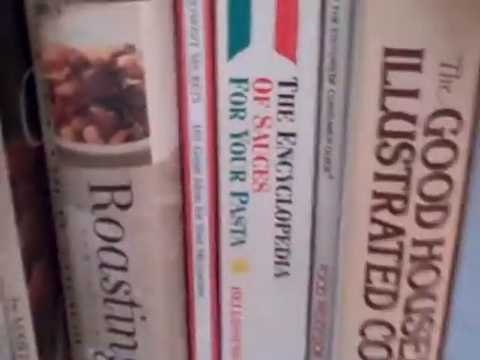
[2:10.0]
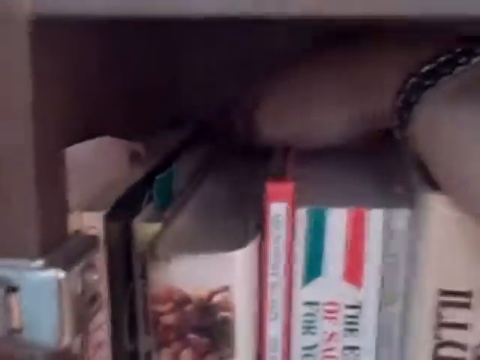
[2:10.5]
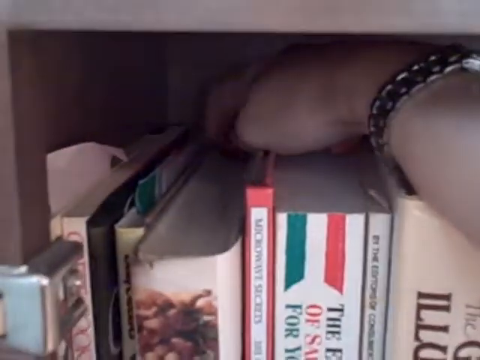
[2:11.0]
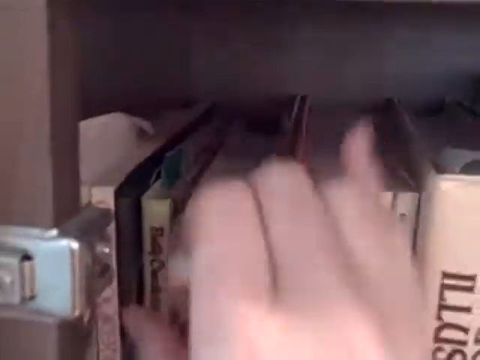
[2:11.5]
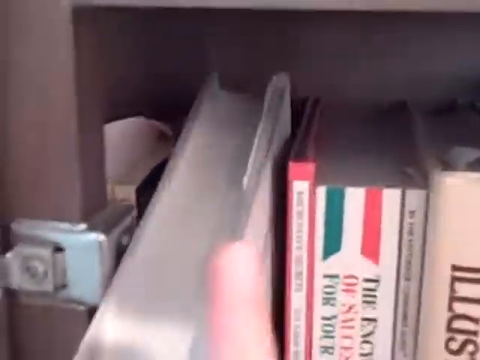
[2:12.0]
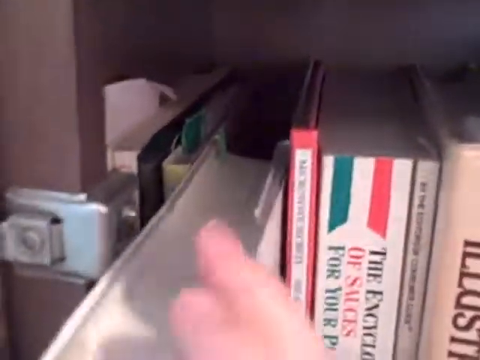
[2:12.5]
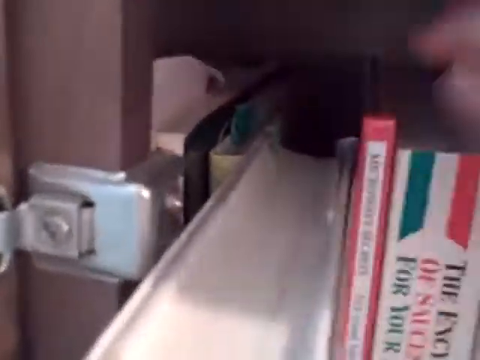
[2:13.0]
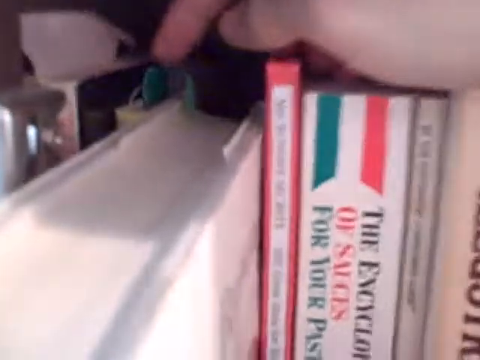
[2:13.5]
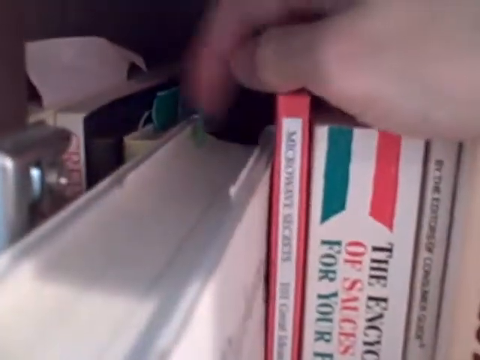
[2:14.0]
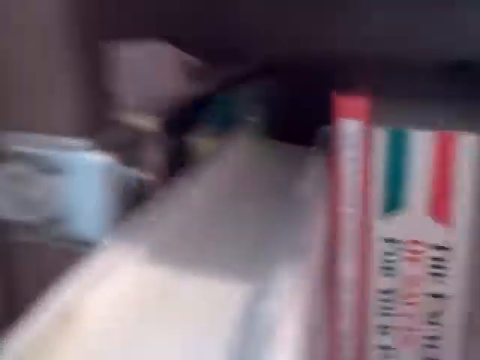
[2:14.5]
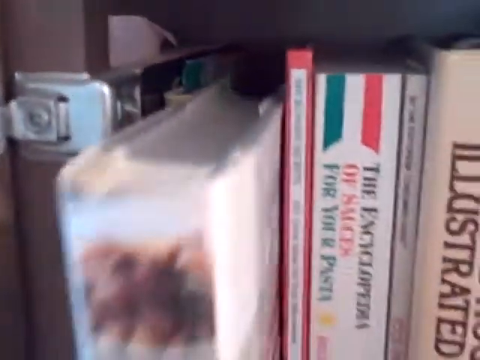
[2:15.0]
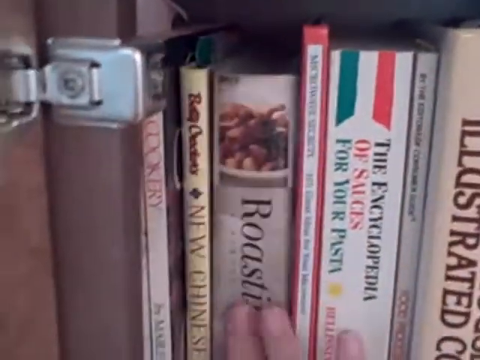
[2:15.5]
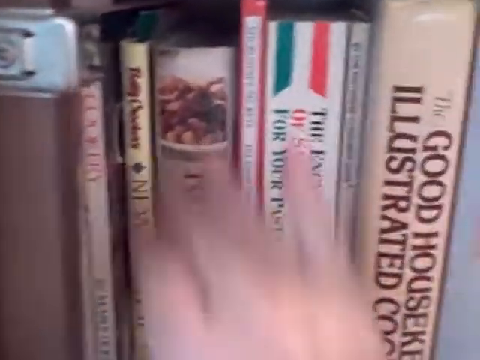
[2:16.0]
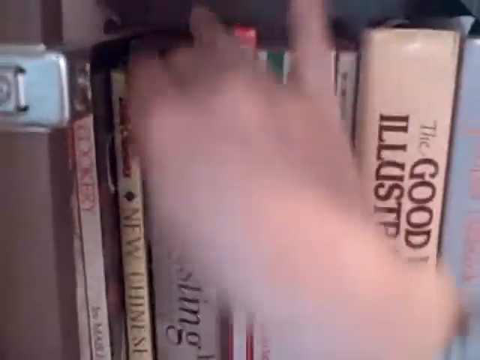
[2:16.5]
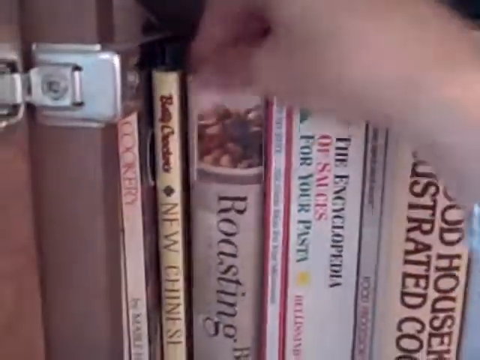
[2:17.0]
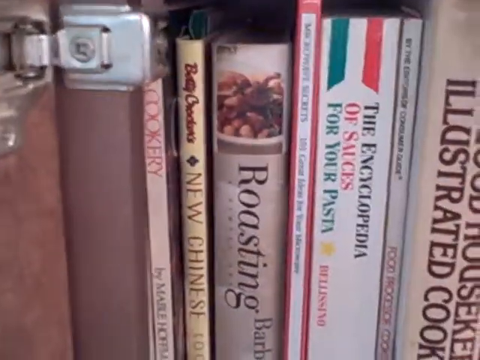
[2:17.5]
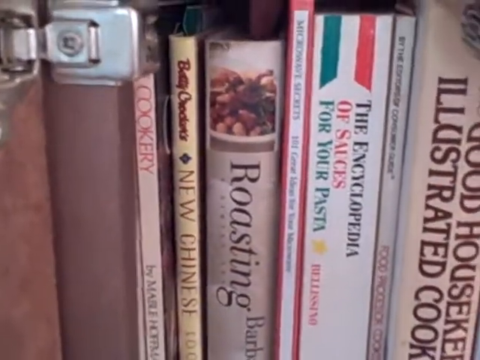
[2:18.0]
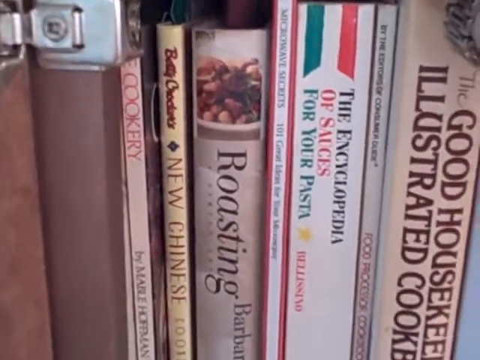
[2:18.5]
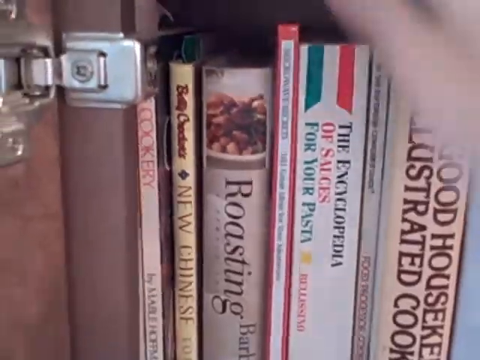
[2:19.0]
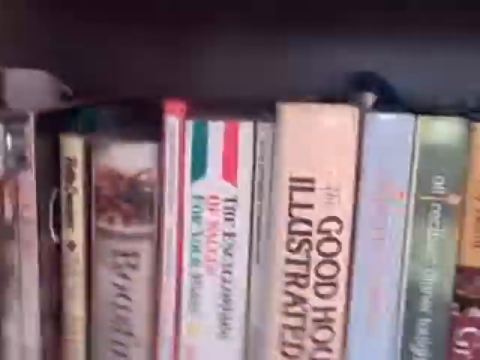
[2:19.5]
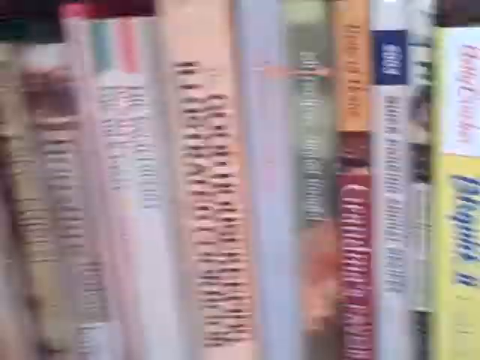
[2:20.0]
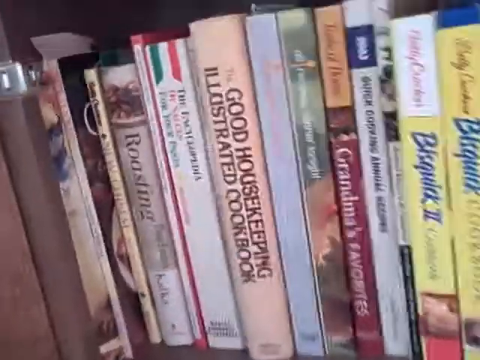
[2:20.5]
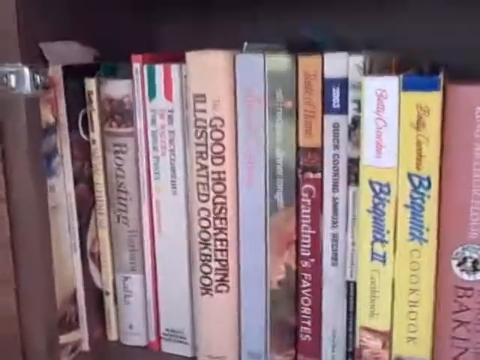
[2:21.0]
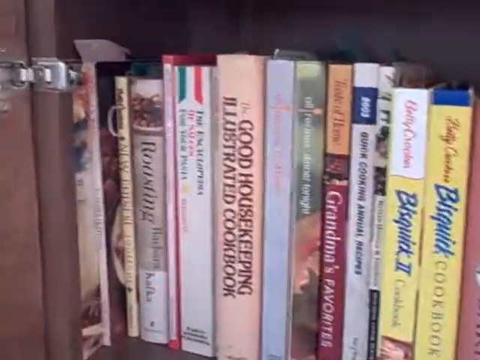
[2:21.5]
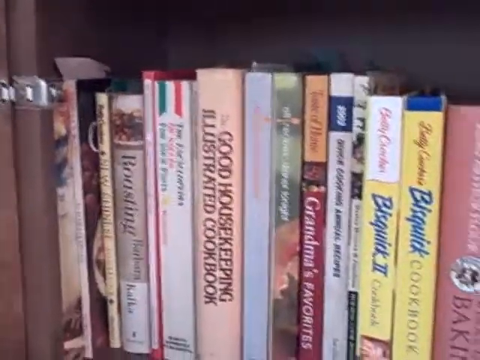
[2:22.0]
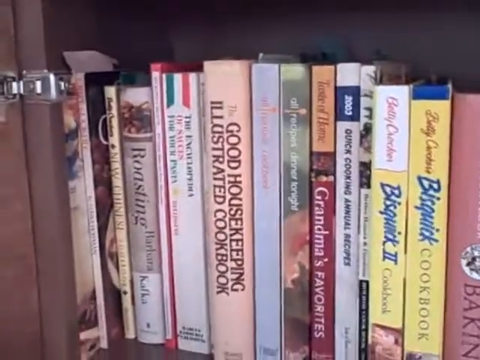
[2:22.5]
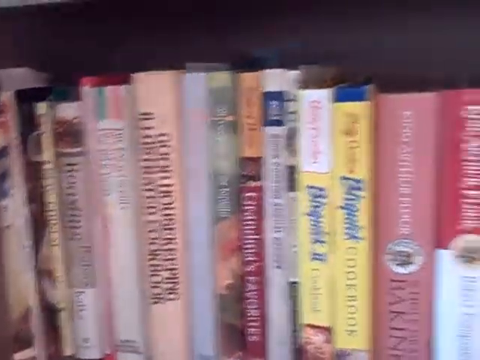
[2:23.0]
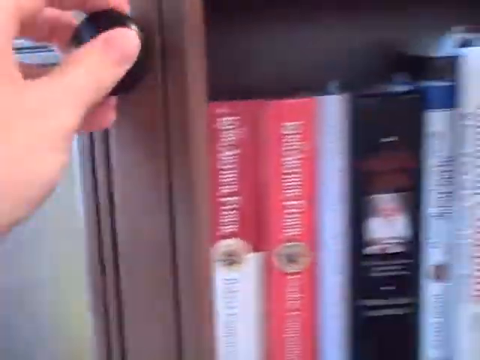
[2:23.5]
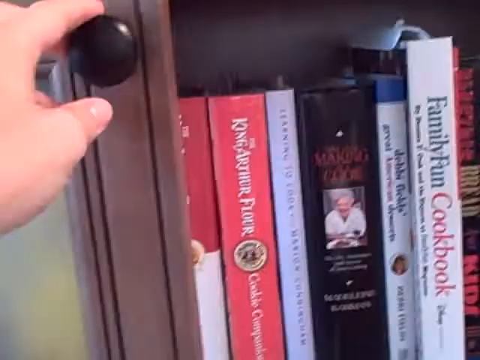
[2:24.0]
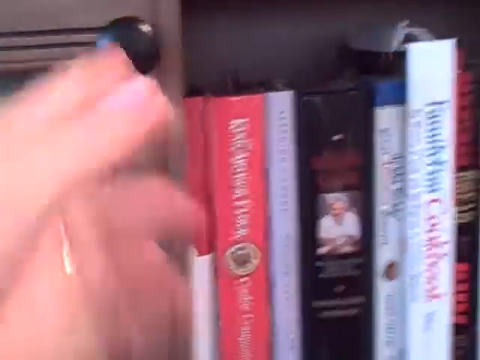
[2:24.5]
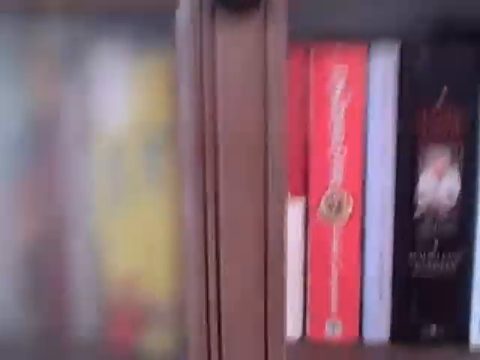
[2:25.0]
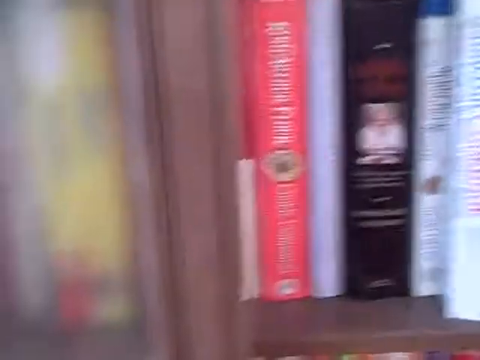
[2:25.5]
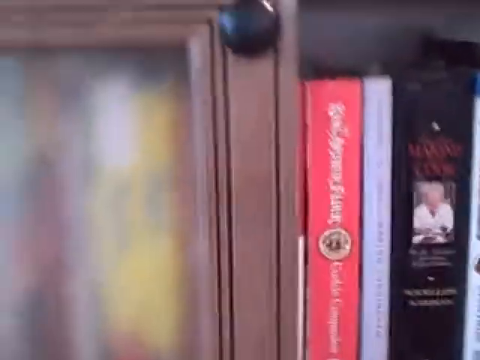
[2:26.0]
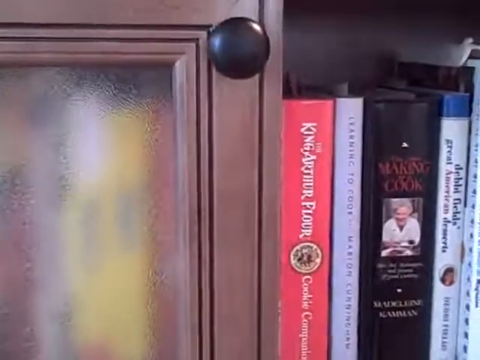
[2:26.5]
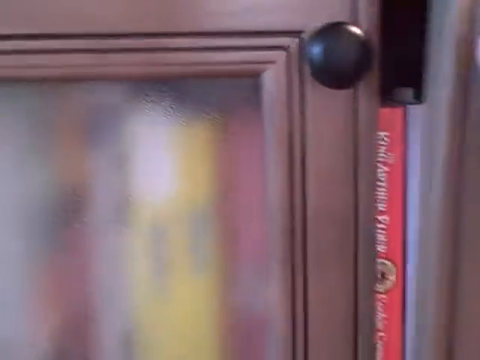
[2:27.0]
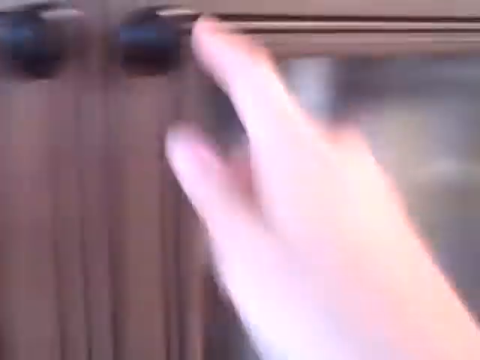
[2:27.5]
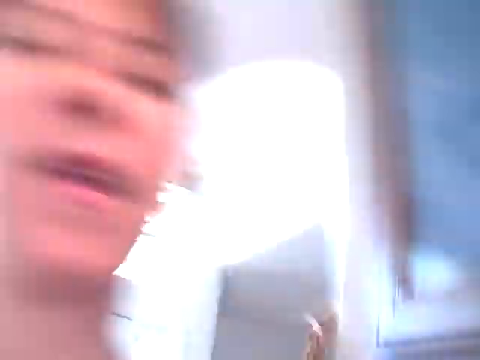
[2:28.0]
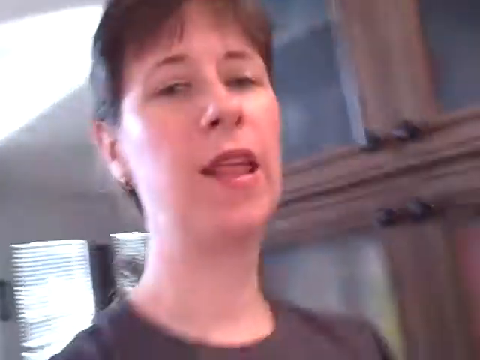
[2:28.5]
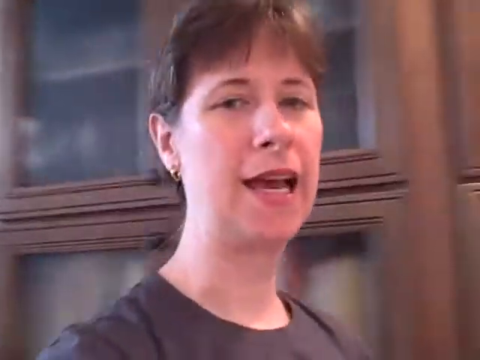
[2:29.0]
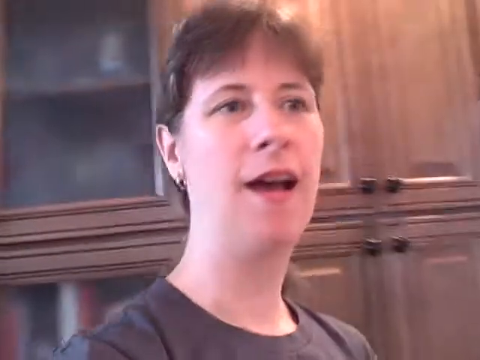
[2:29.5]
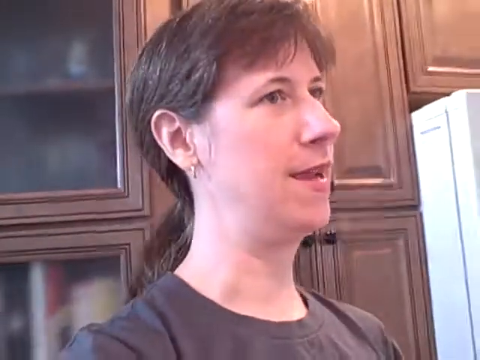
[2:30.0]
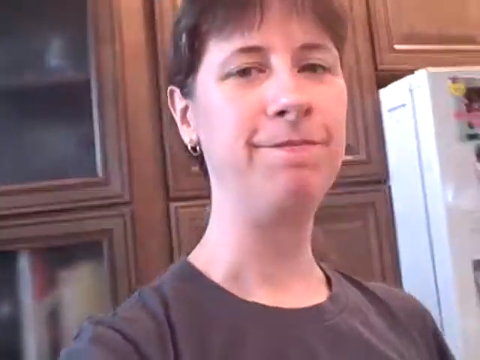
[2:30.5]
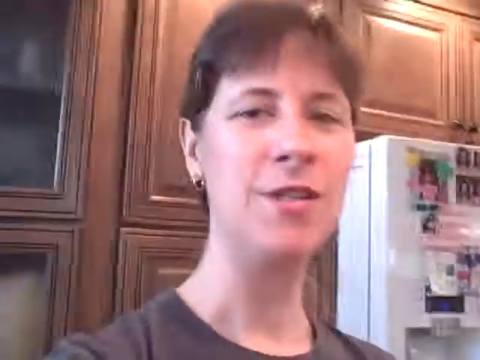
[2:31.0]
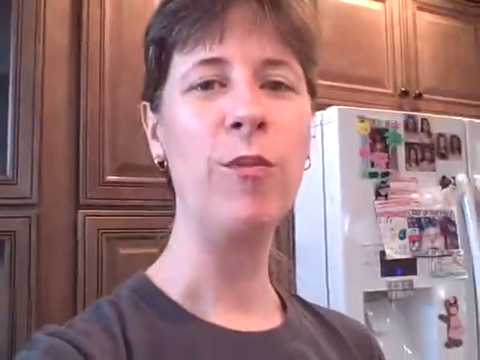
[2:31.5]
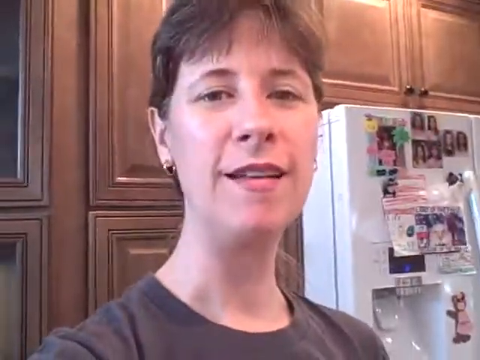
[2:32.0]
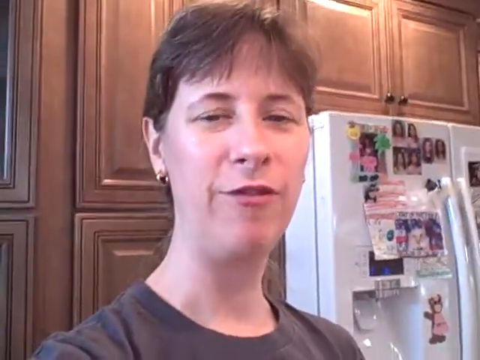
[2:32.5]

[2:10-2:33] In the bookcase, she moves the book back and forth, flicking the green label at the top like a bookmark, pulling the book out to show the green bookmark and pushing it back in, and handling the top of the book. Next to it are a red book and a white book, with a beige book beside that. She closes the left-hand cabinet door where the book is; a red book is visible on the right-hand side, and she closes that door too. Her silver bracelet watch is visible on her arm, and the hinges of the door can be seen as she shuts both doors. The camera pans back to the woman's face; the sunlight is not on her as much. She looks like she is saying something to the camera. In the background is another window with blinds, with daylight visible through it.